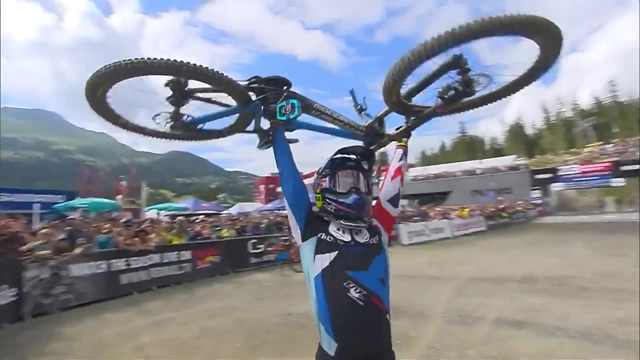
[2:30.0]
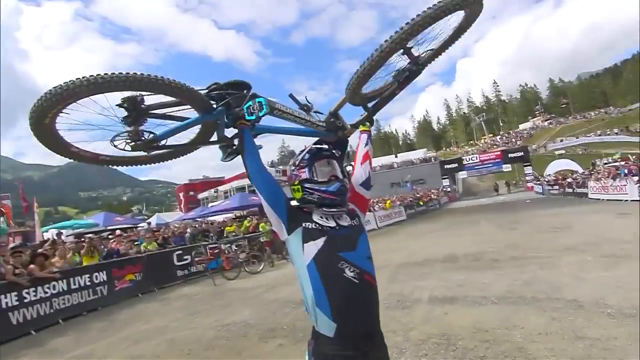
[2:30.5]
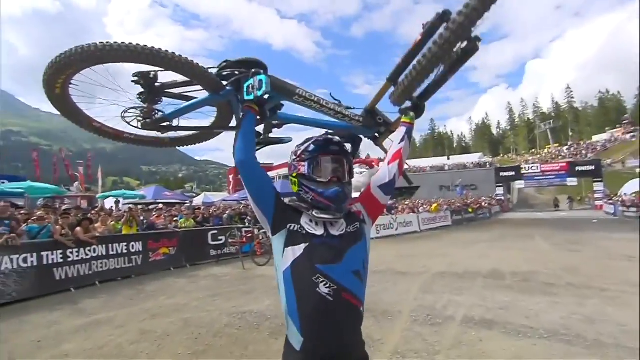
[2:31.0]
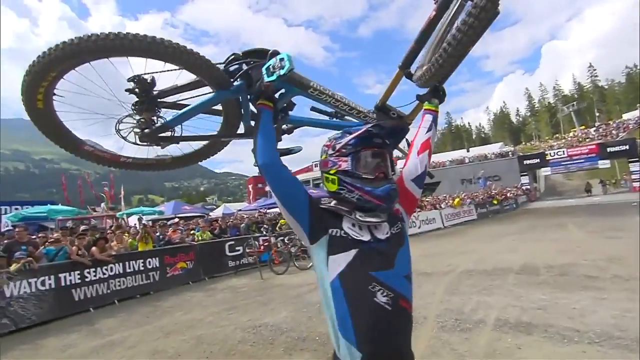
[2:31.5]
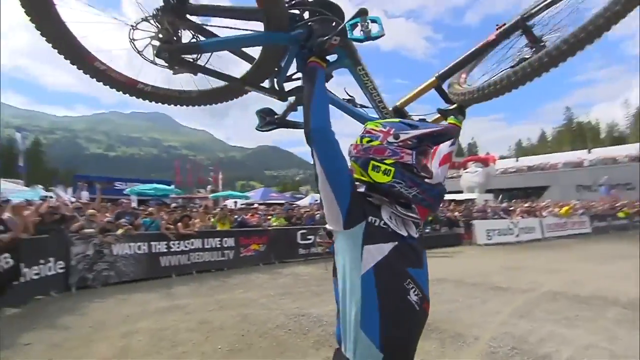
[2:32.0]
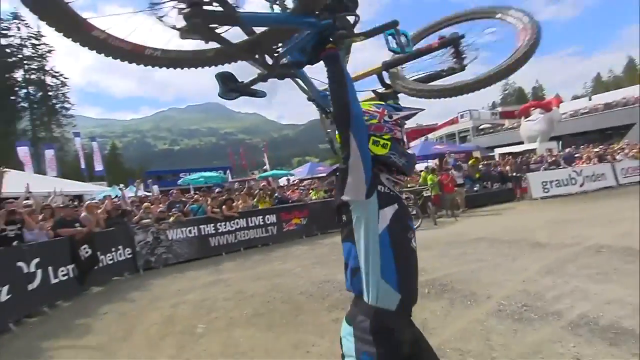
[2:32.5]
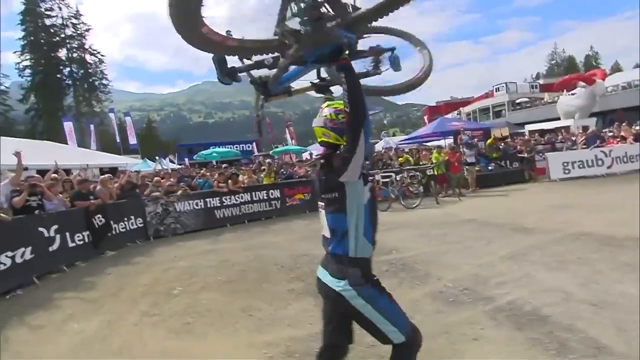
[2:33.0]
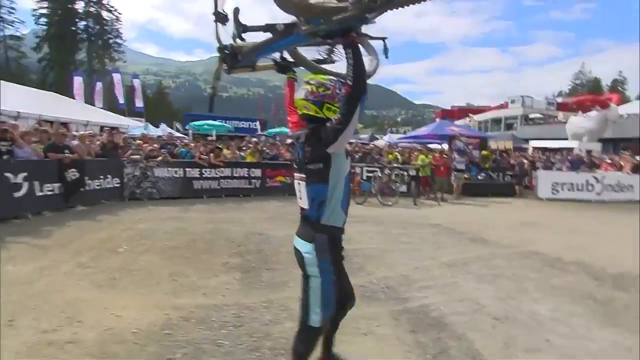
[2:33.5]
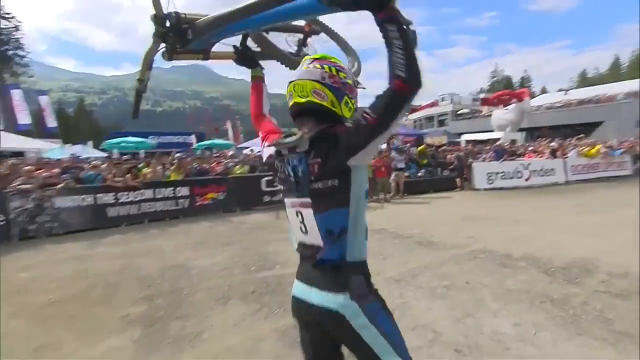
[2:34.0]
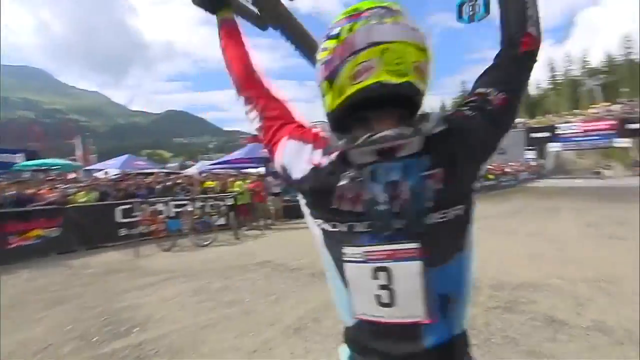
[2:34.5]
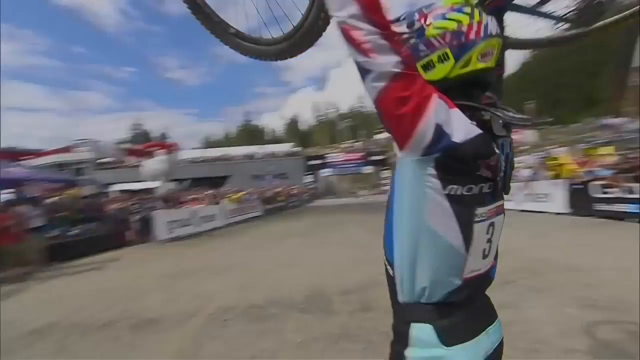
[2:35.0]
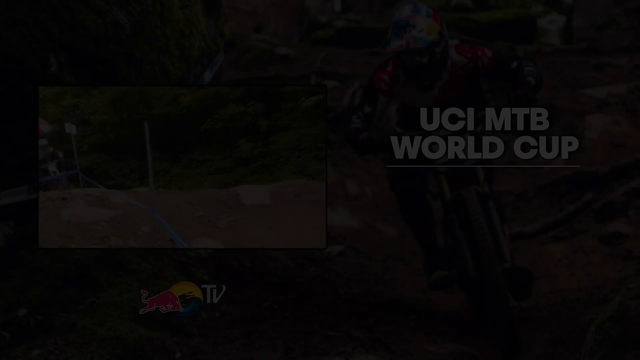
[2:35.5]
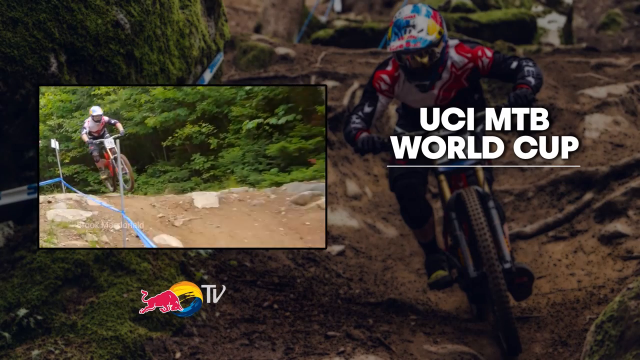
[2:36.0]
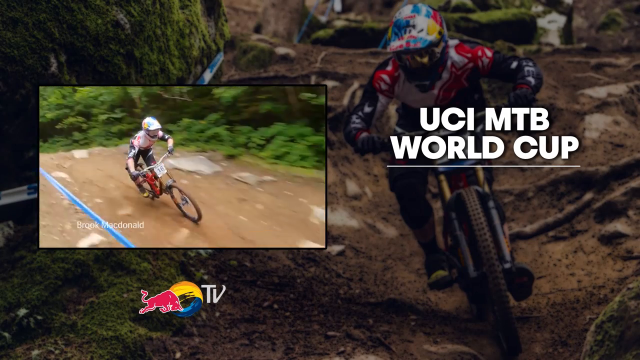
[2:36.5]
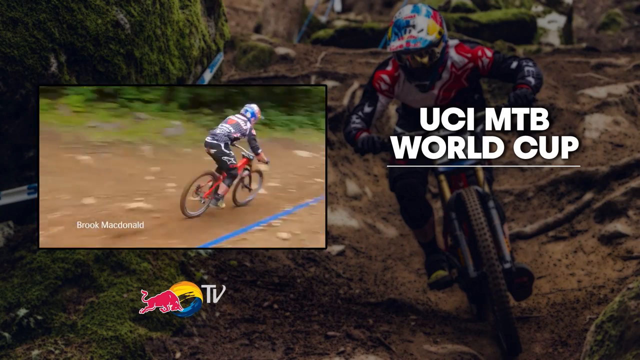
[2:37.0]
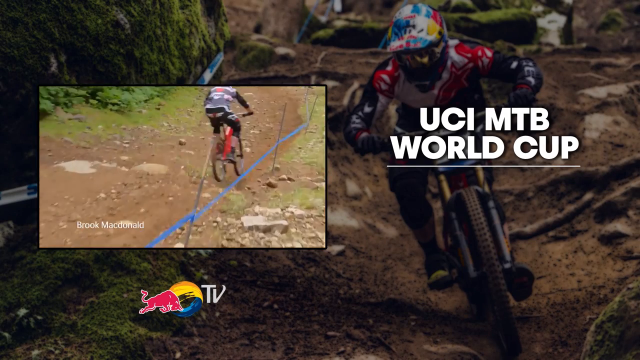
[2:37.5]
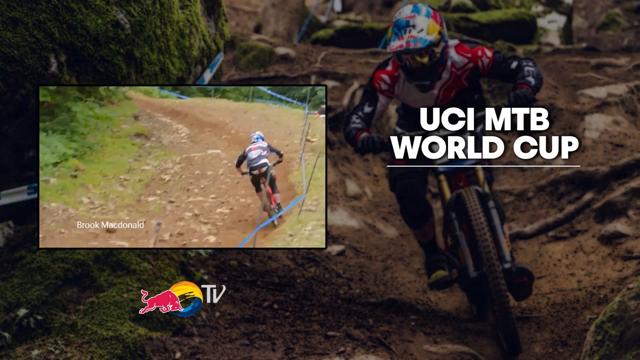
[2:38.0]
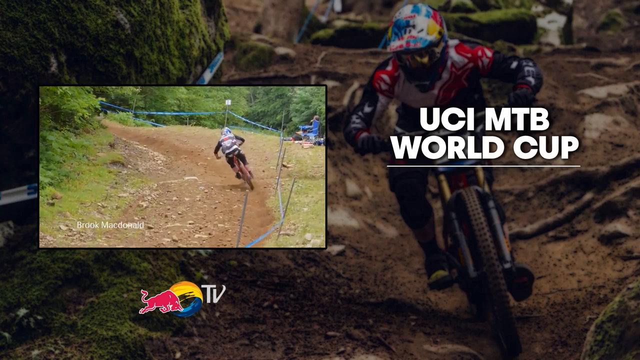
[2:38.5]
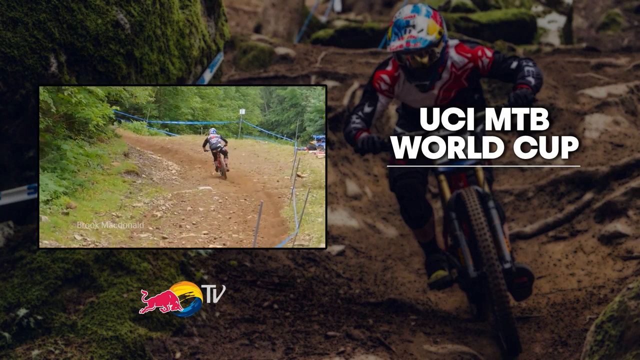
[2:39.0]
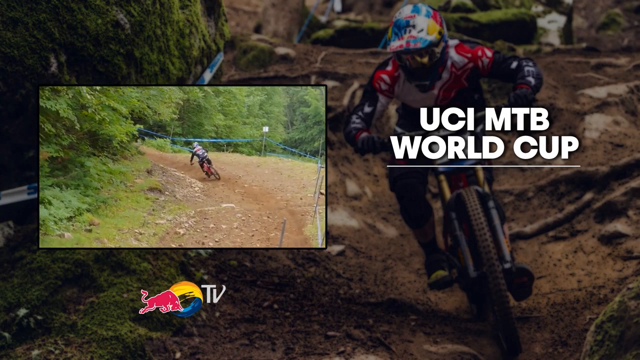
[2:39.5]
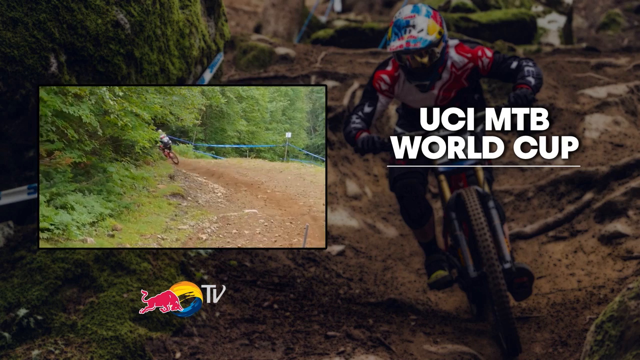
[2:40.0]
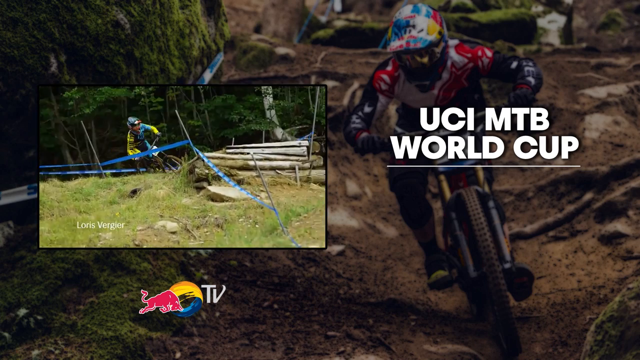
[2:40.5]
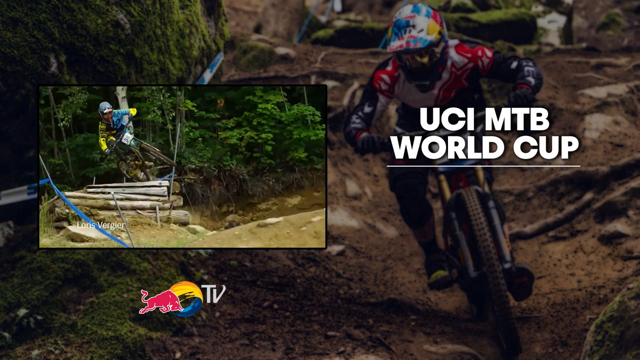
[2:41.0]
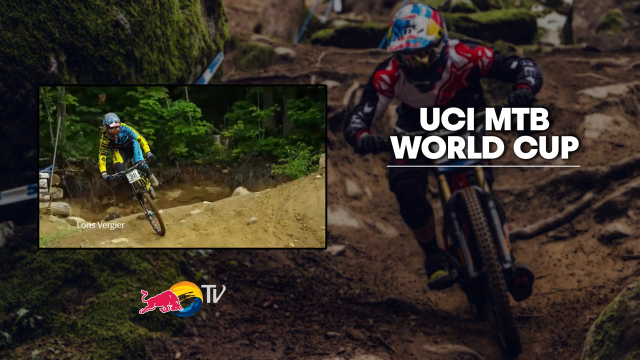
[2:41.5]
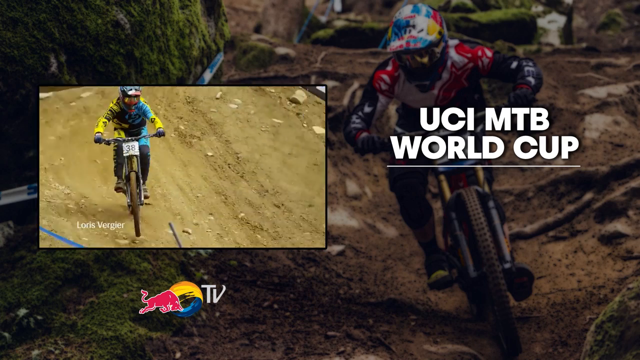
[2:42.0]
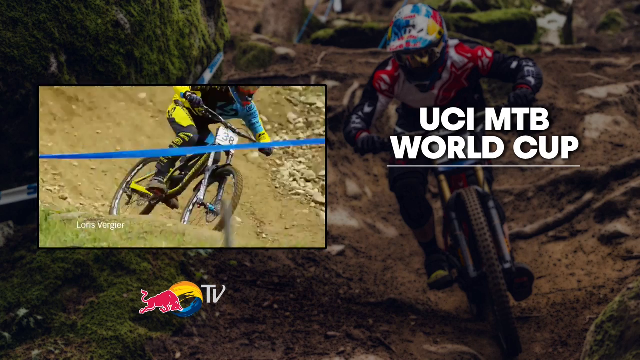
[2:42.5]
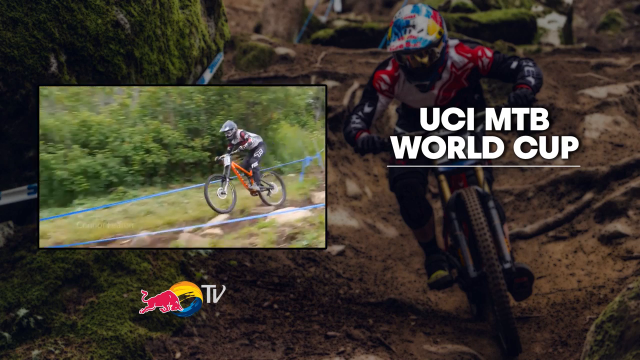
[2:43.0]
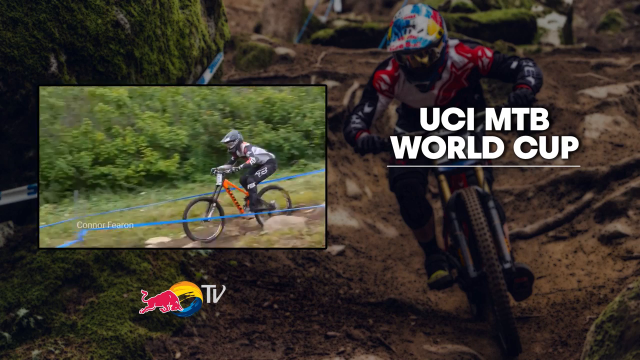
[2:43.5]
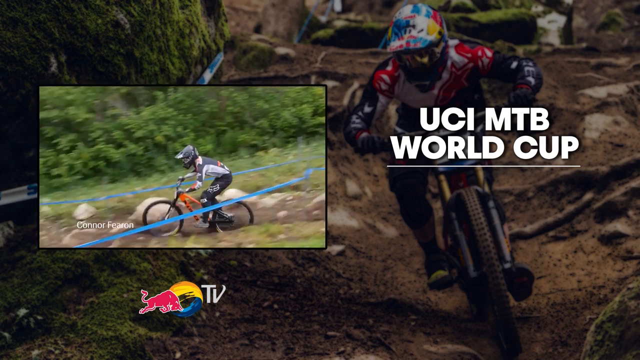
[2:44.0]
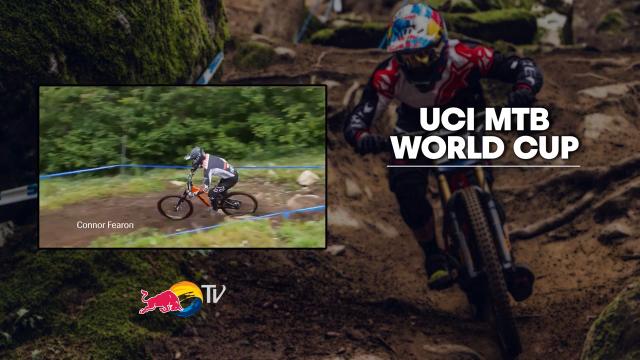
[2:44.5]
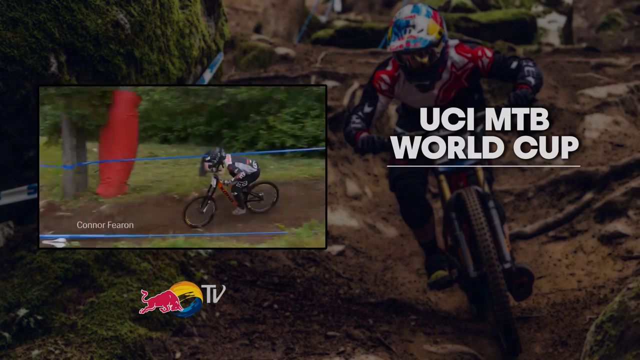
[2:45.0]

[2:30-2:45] The biker raises and pumps his bike in the air, facing the crowd surrounding him at the finish line. The number 3 is visible on his back. The race ends, and clips of the UCI MBT World Cup follow, showing different people going down the dirt track. Two Red Bull signs and one Red Bull TV sign are visible. While the clips of different racers play, there is also a picture of a biker racing down the race track.